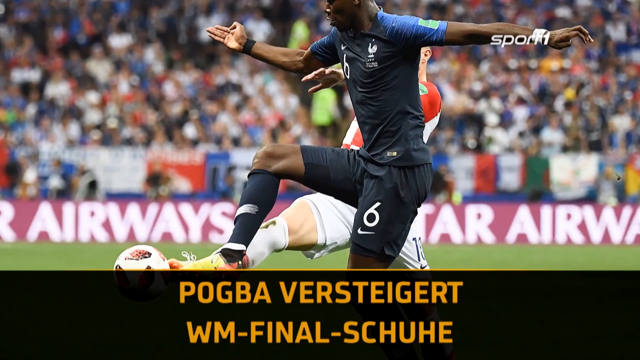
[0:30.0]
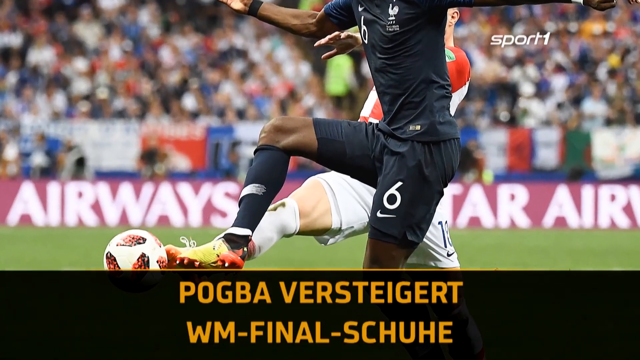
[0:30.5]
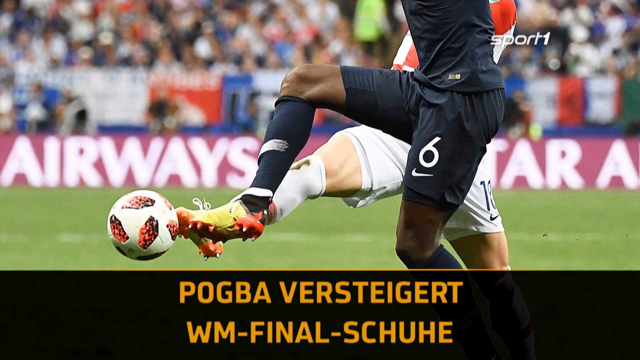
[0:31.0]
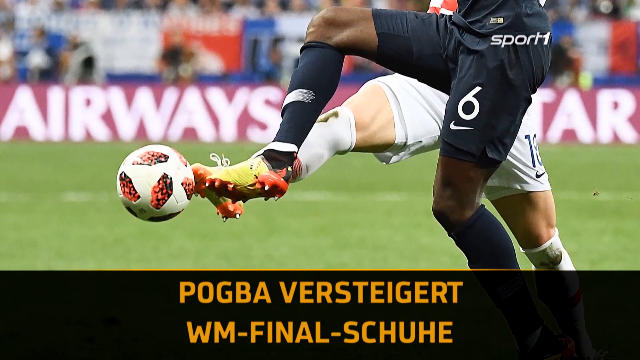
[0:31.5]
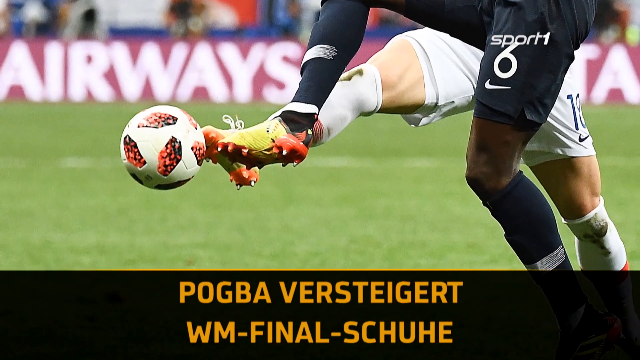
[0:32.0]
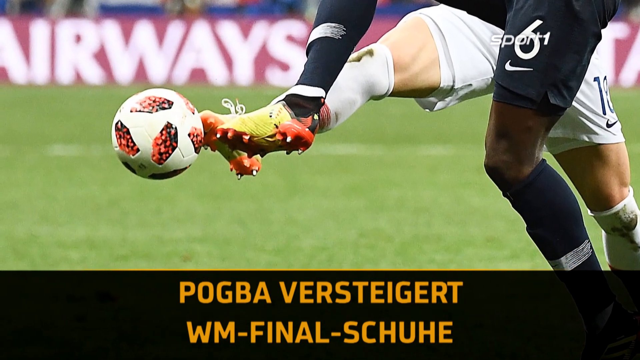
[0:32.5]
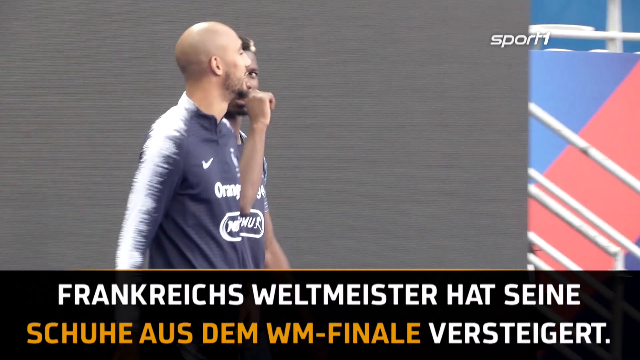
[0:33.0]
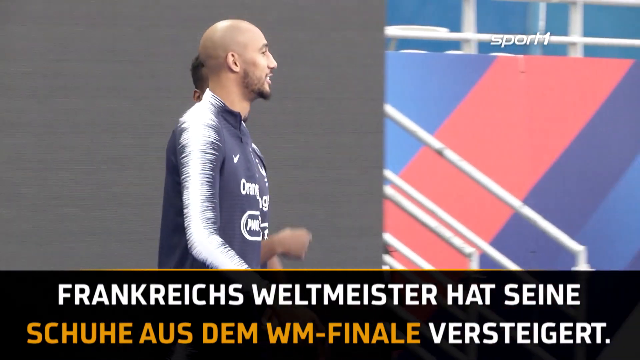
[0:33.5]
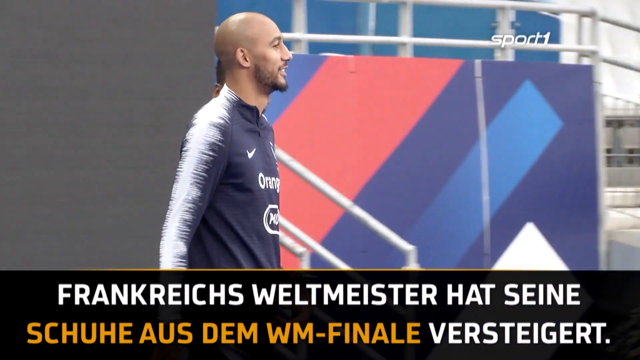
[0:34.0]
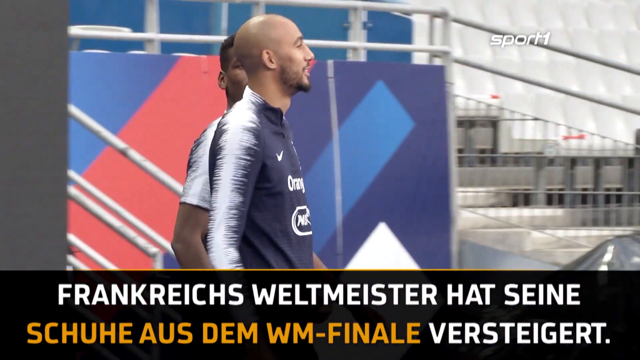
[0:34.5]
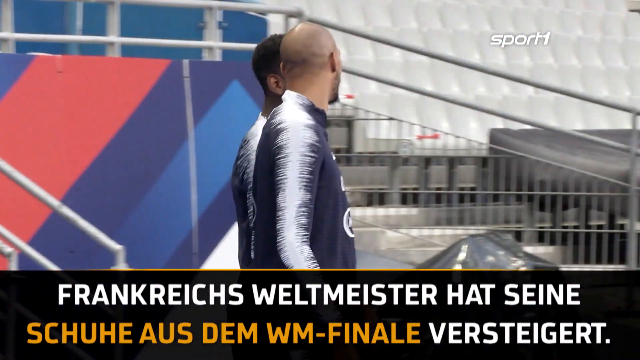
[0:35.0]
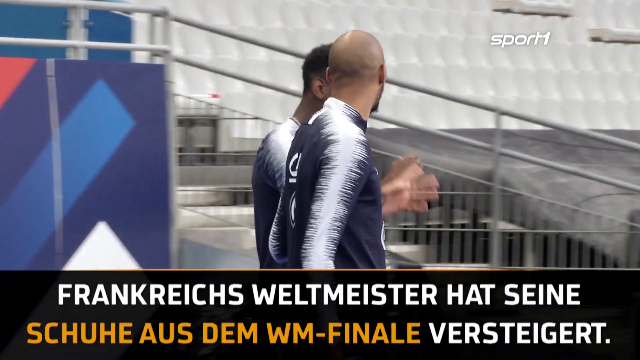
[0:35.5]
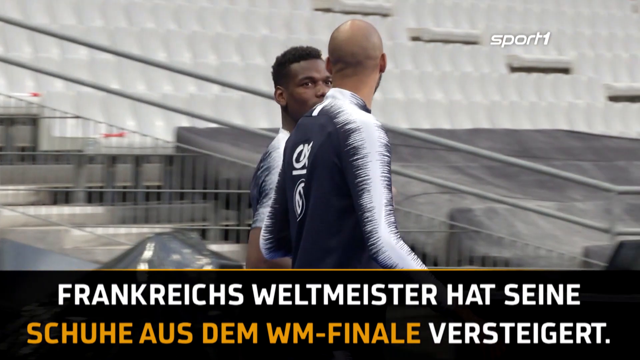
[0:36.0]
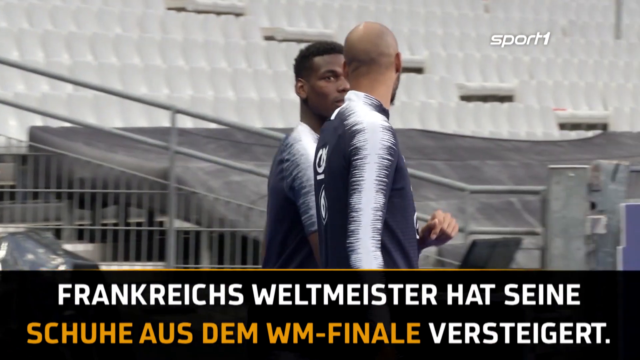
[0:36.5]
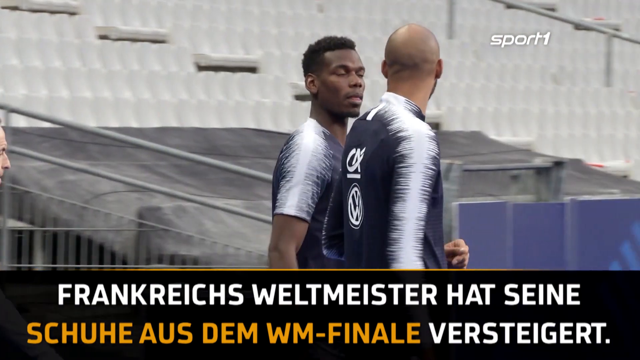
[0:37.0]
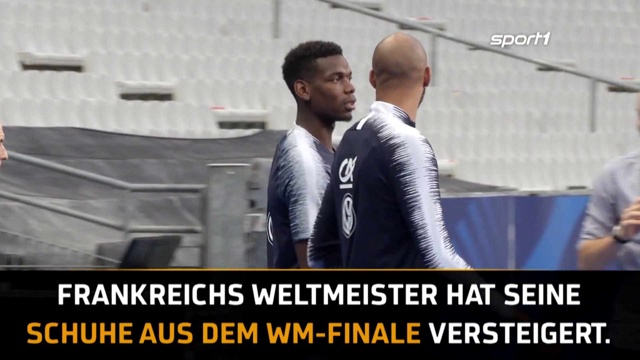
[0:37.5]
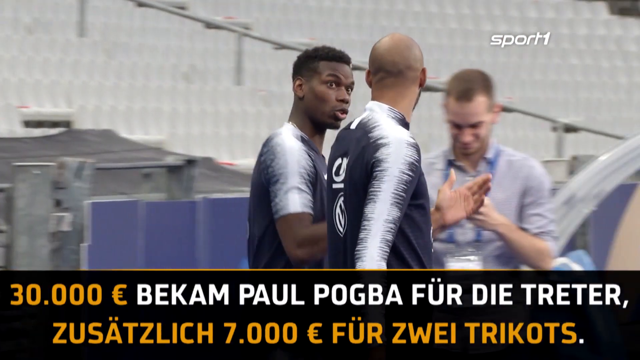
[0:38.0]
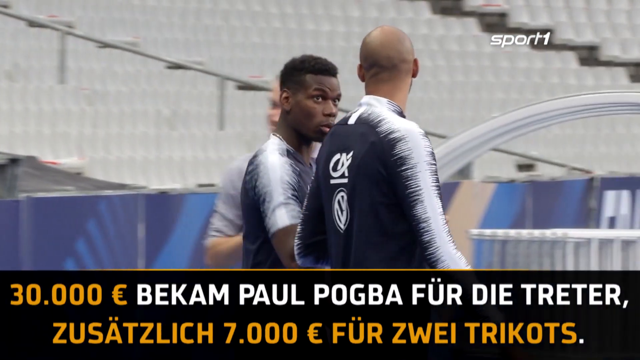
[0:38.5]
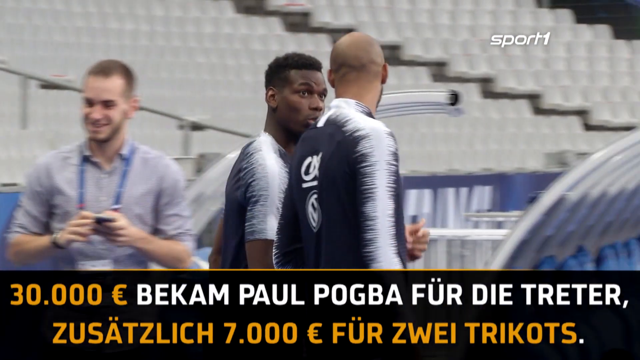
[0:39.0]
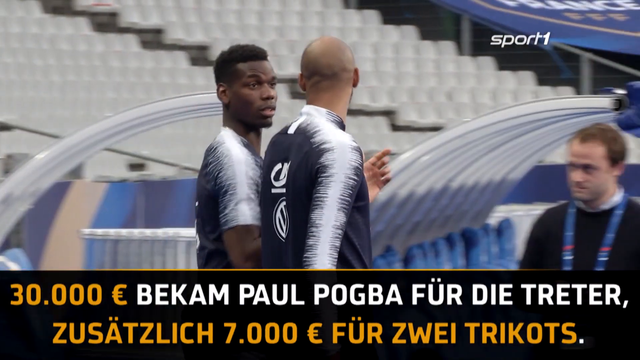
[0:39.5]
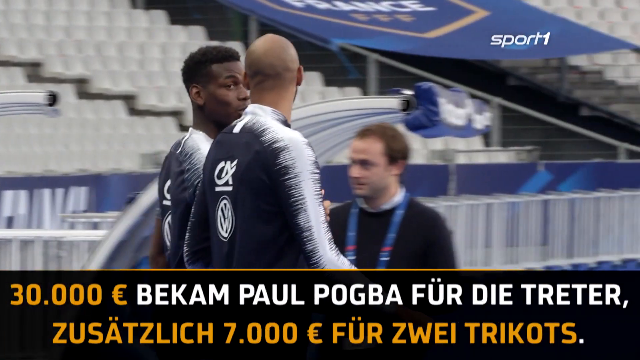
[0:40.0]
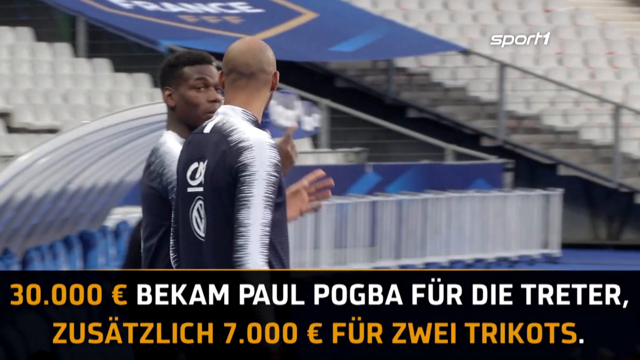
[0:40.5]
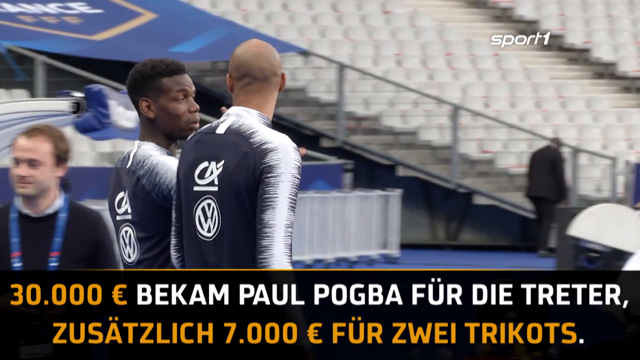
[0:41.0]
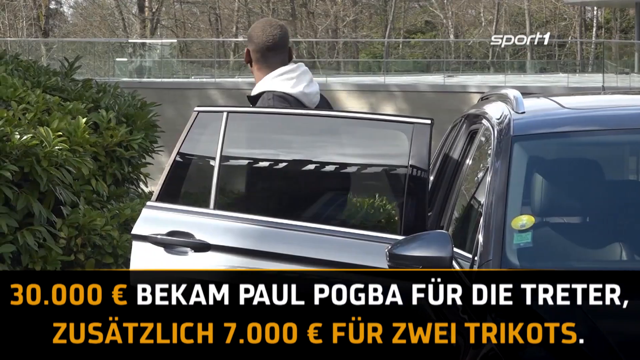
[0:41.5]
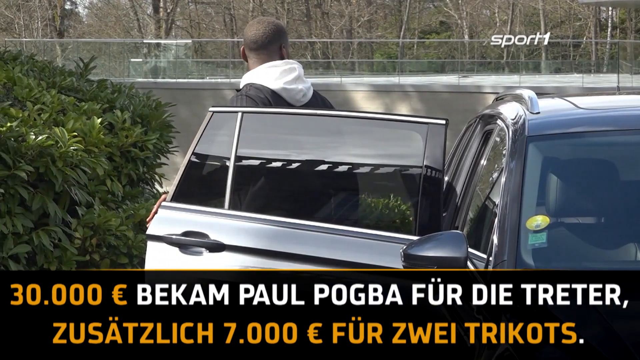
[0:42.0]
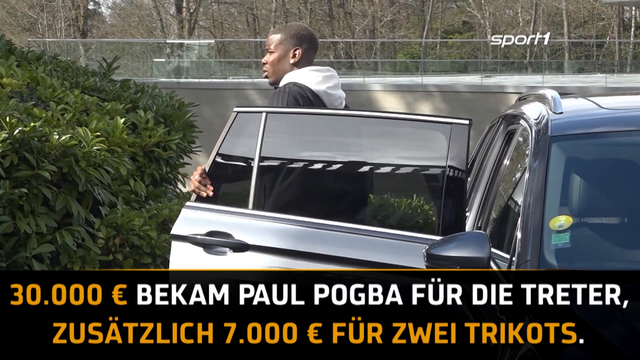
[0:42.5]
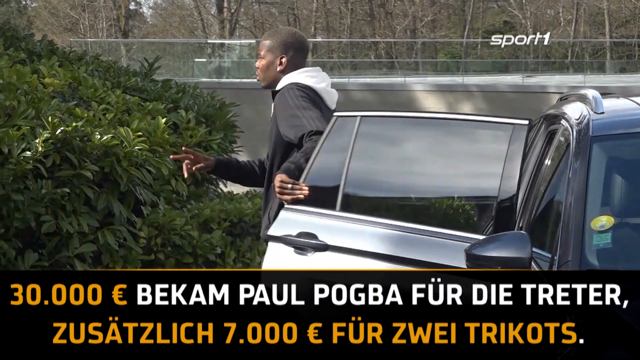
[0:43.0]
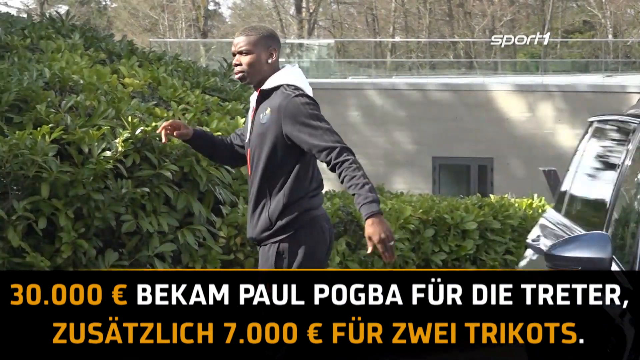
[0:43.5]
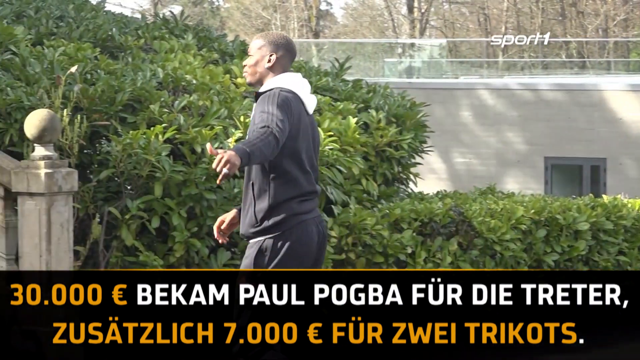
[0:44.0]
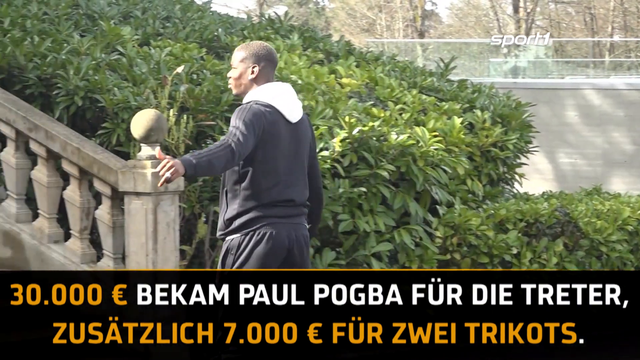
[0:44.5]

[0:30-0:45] A still image shows two soccer players fighting for a ball. Both are sort of diving toward the ground, and both of their feet are touching a soccer ball in the air. One wears a white jersey and more colorful cleats, and the other wears white shorts. After the video zooms in on the still photograph, there is footage of a Black player talking very animatedly to a teammate as they walk on a field, with some of the arena structure visible in the background. The scene then changes to him getting out of his car; he closes the car door behind him and begins walking toward a set of stairs. He is wearing sweatpants and a hoodie.